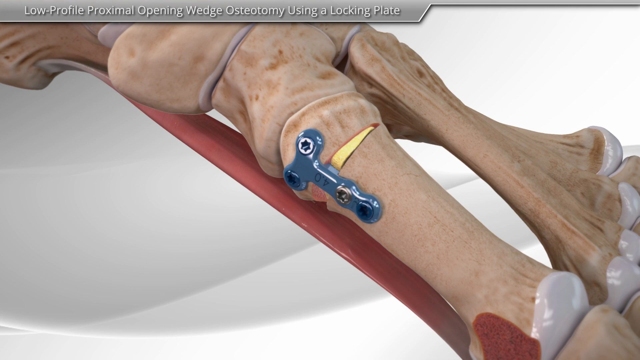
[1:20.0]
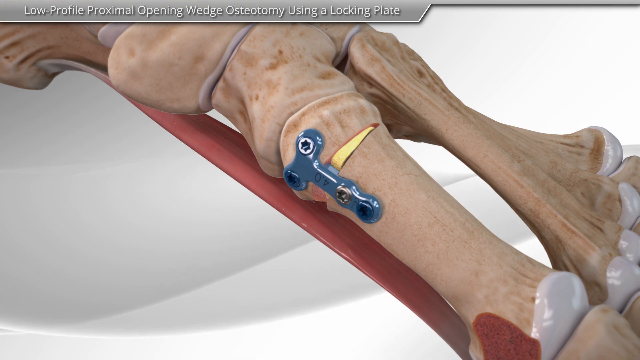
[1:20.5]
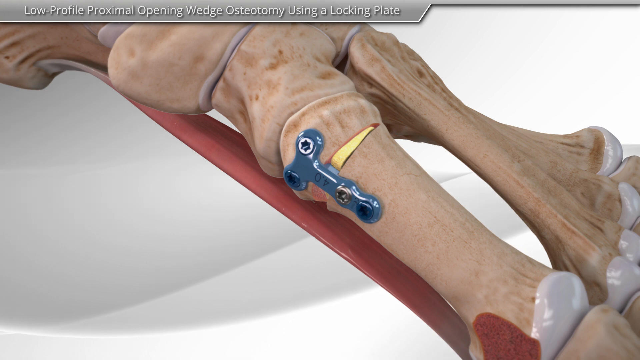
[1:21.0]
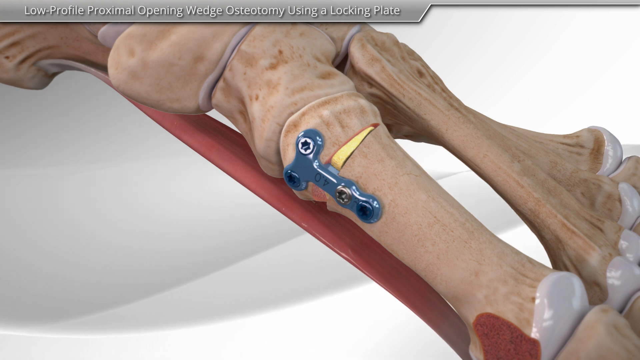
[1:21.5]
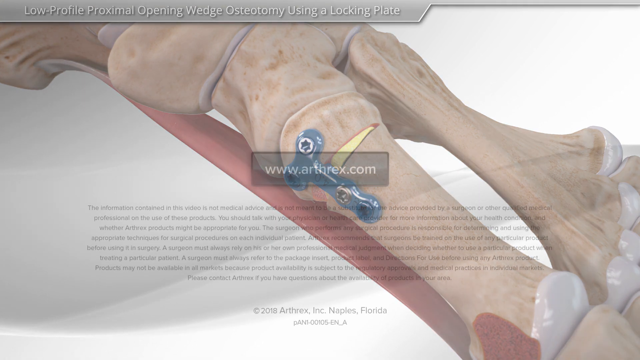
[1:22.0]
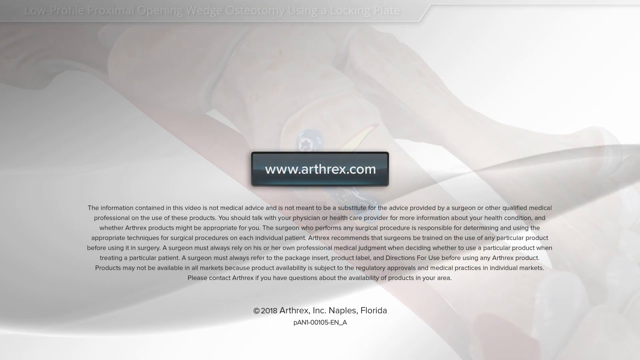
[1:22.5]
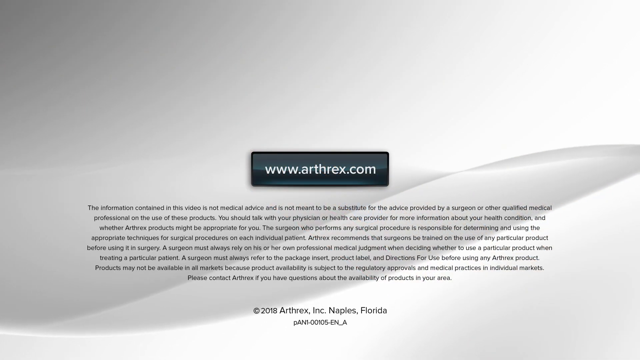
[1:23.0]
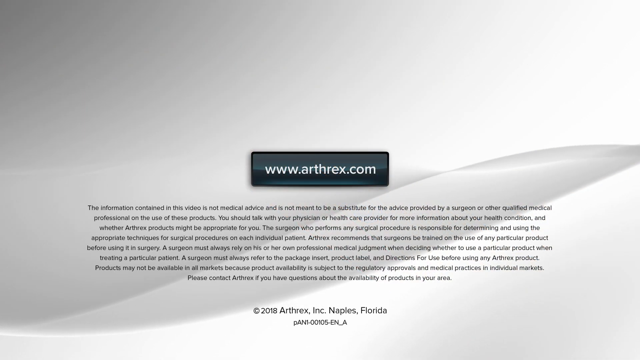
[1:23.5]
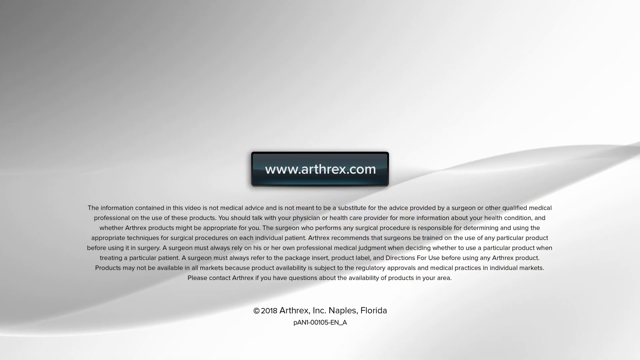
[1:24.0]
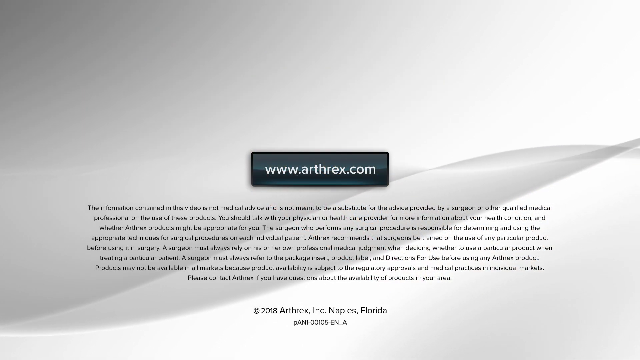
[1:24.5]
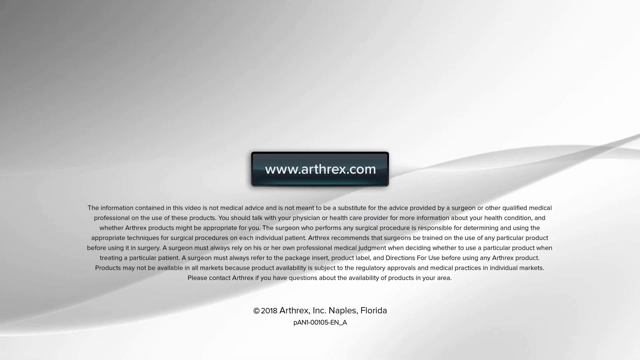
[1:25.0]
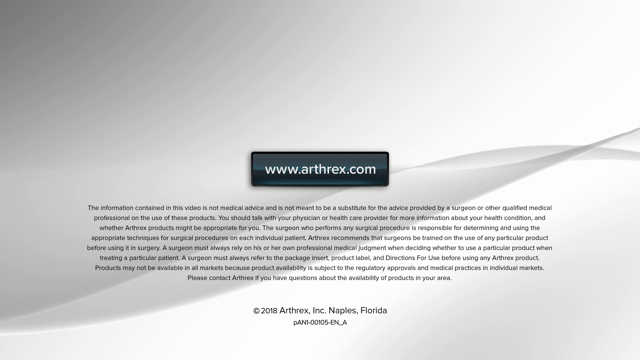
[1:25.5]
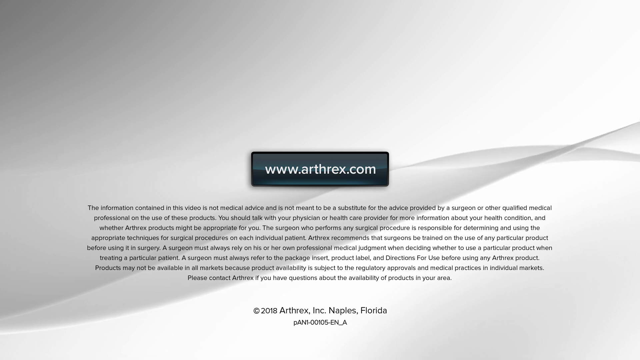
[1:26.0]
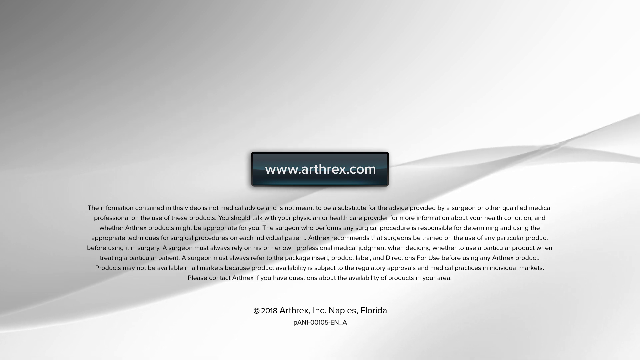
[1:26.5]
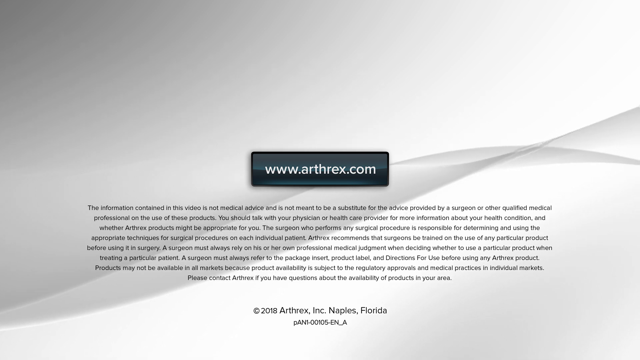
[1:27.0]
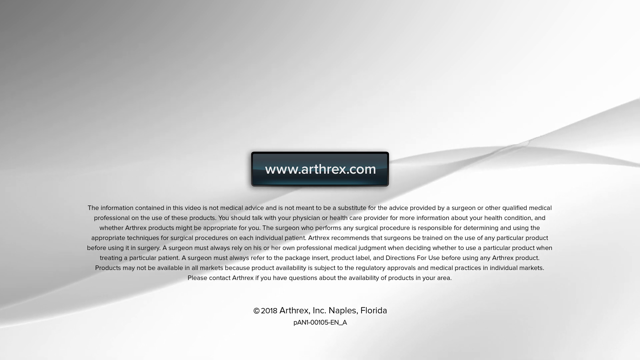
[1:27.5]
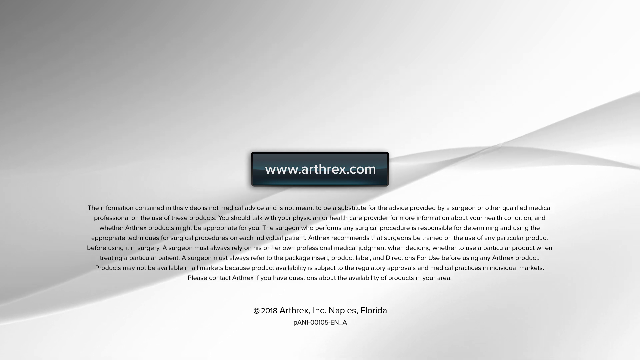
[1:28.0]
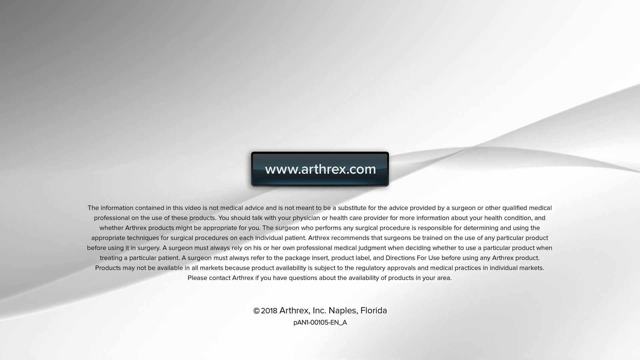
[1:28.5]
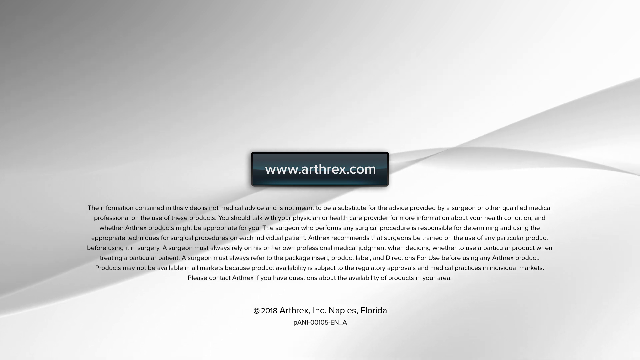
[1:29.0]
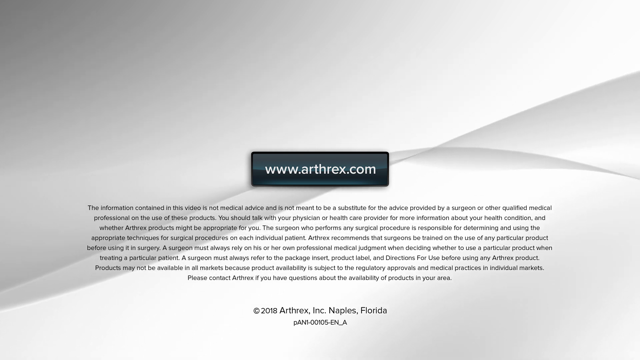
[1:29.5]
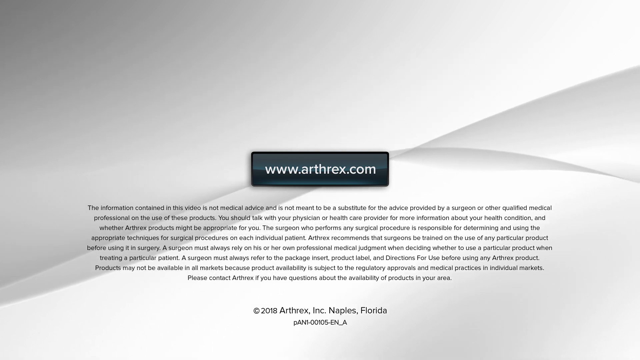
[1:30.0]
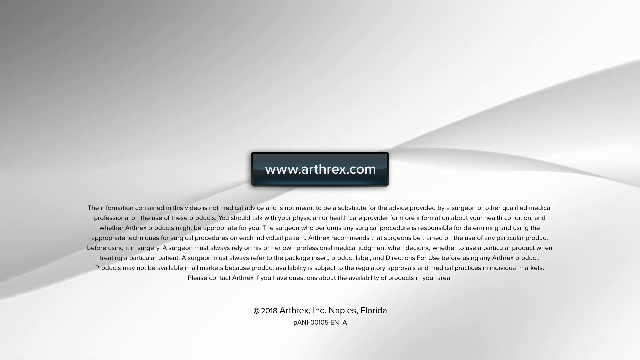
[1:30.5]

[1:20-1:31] A replica of the bones of a human foot is shown in a close-up view of the joint of the big toe. The heel of the foot is in the upper left-hand corner, and the toes leave the screen to the lower left. A blue screw plate has been placed across the joint, with two screws on the top and two screws down the bottom in a T-shape. The background behind the foot is white, with darker lines running across the screen that move toward the left so that the background appears to move continuously behind the foot. This movement continues after the view fades out and is replaced with very small text across the screen, as well as a dark gray text box with white writing showing the web address.